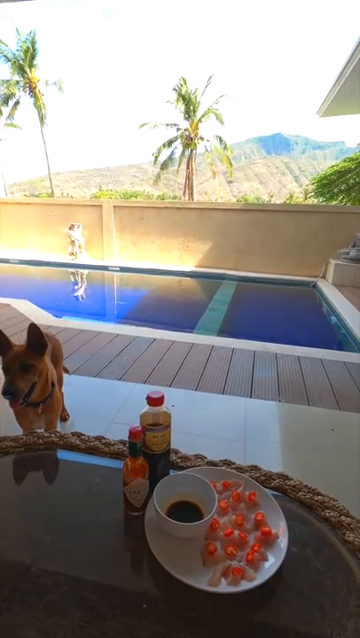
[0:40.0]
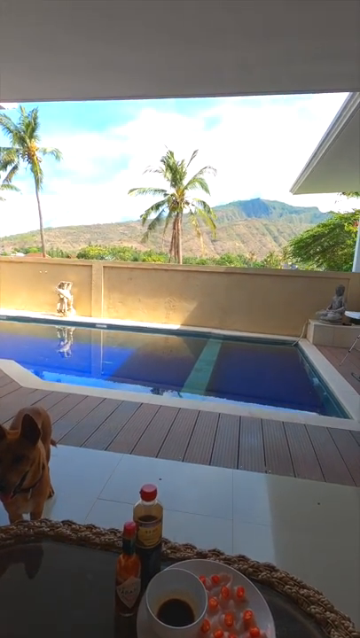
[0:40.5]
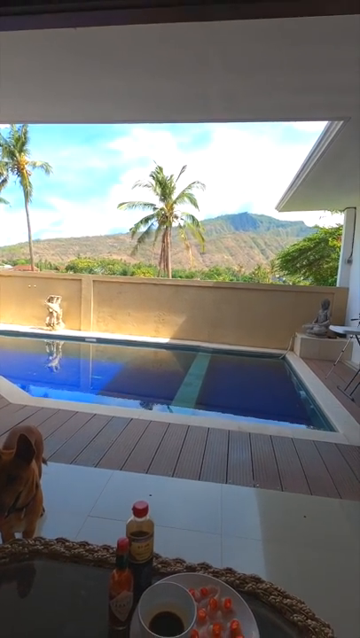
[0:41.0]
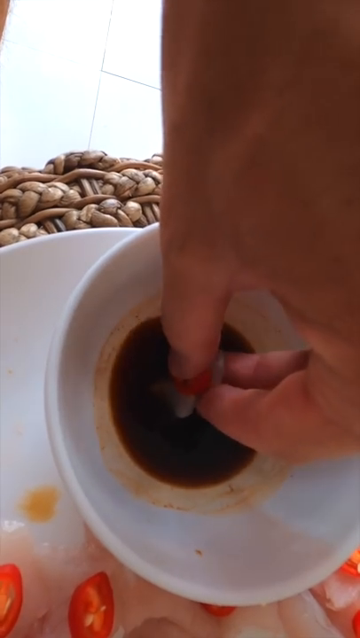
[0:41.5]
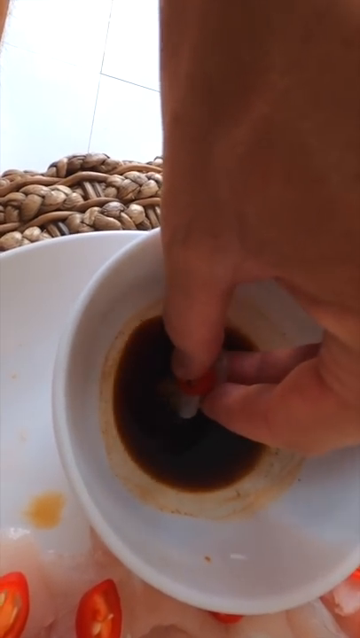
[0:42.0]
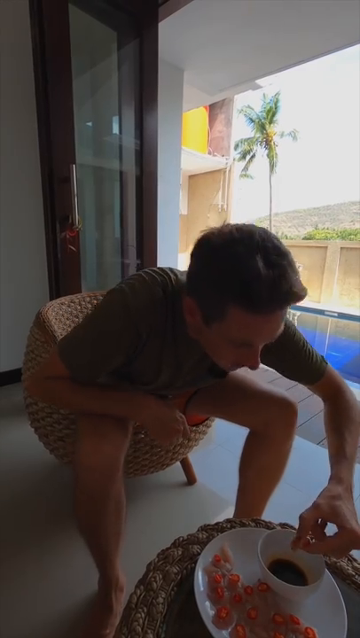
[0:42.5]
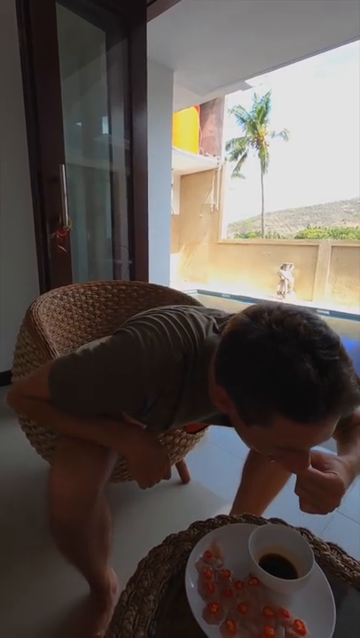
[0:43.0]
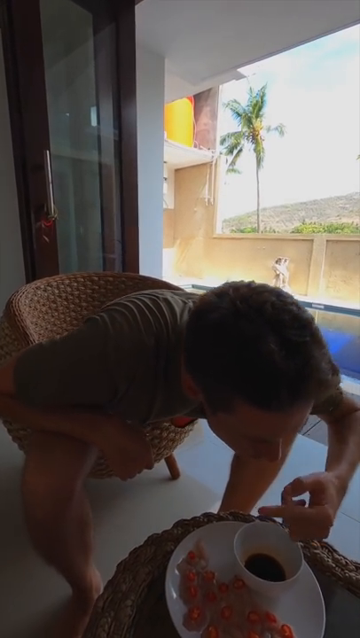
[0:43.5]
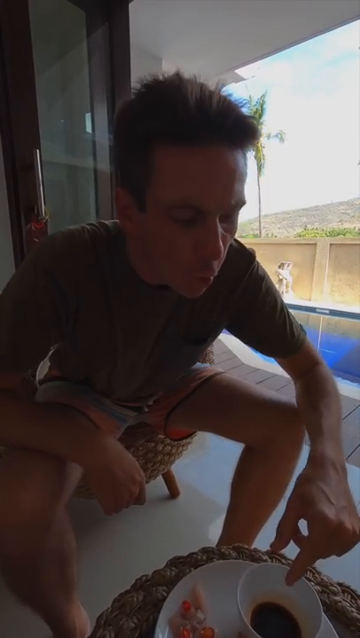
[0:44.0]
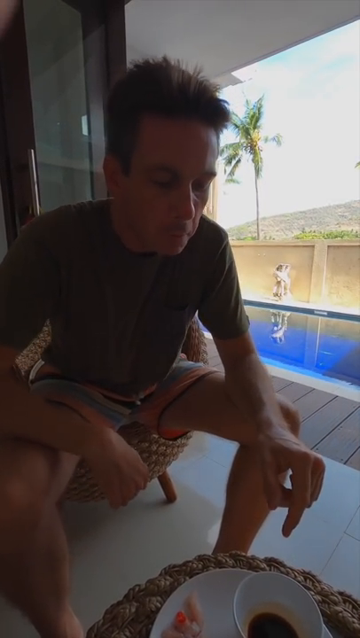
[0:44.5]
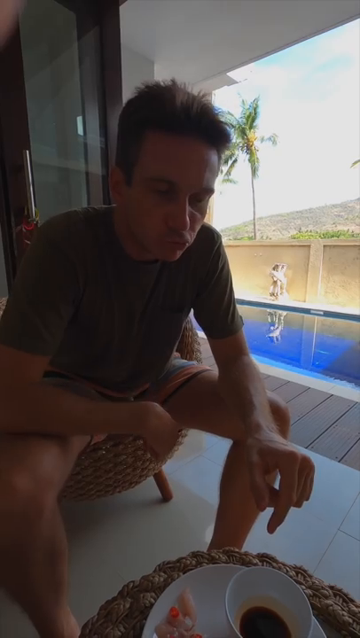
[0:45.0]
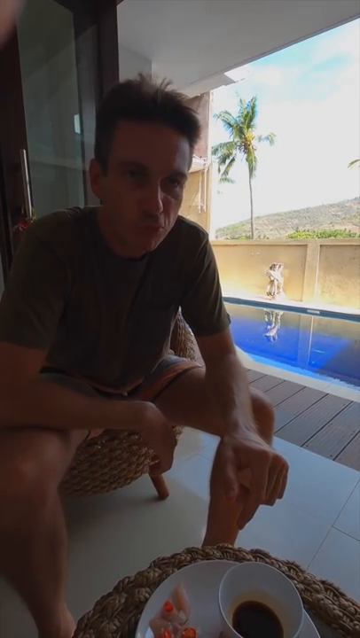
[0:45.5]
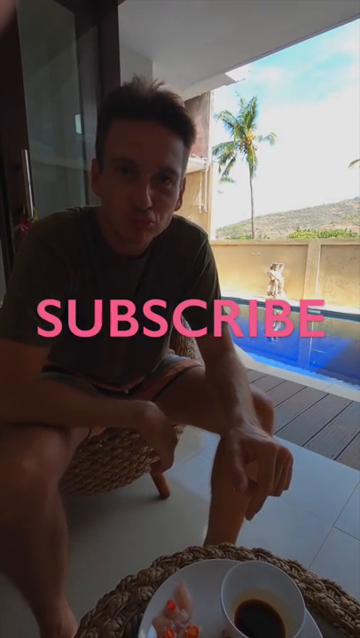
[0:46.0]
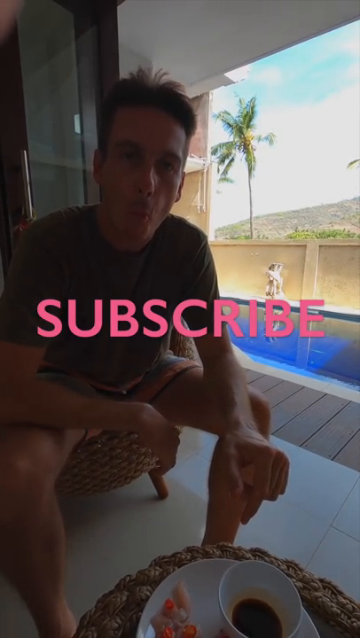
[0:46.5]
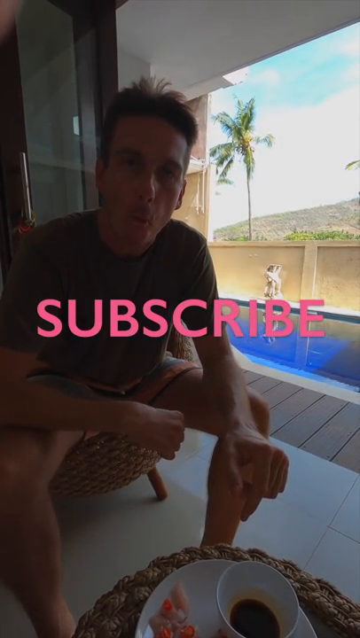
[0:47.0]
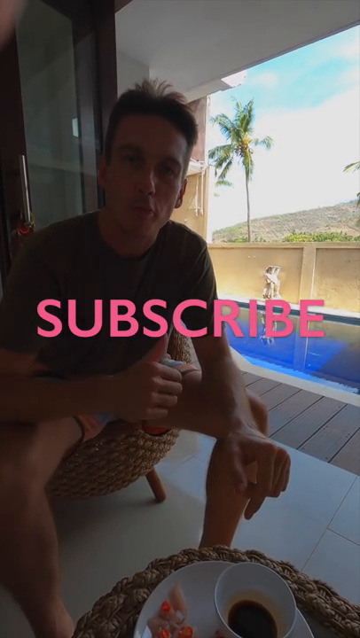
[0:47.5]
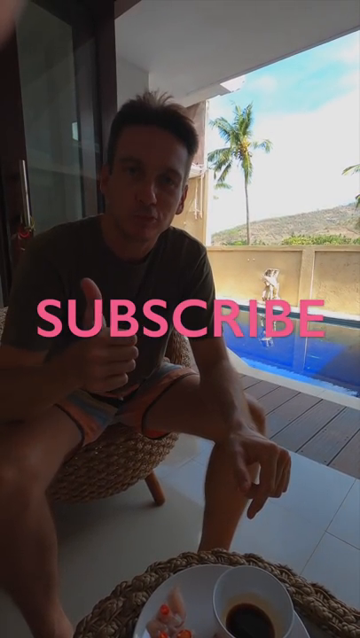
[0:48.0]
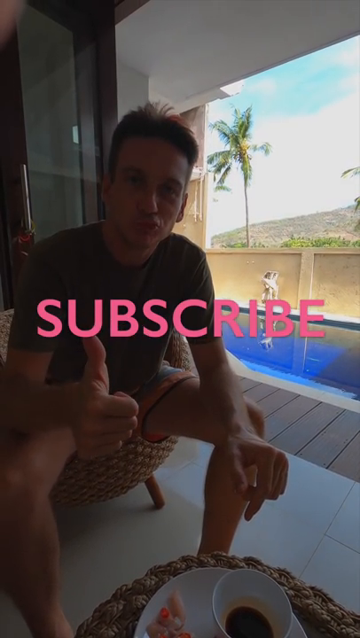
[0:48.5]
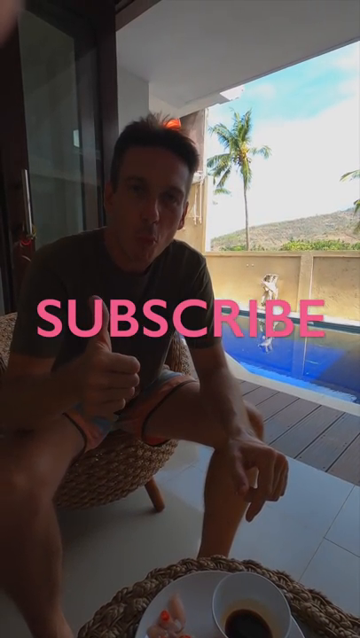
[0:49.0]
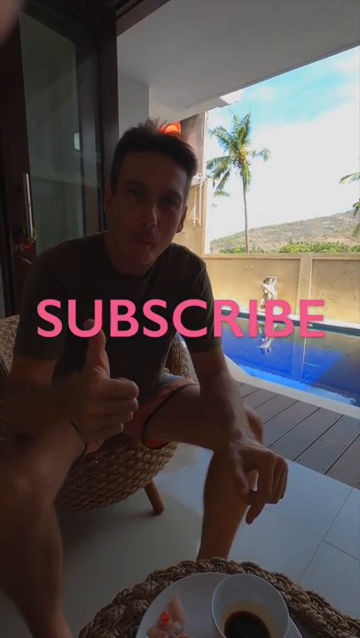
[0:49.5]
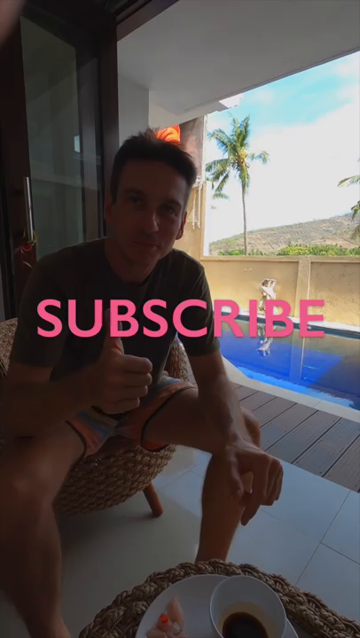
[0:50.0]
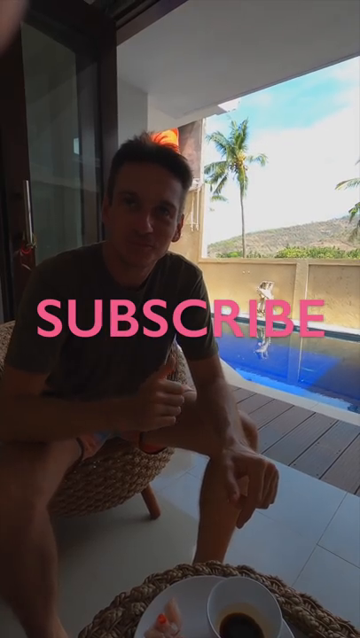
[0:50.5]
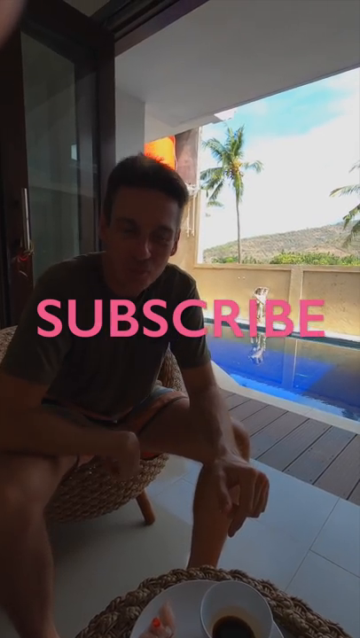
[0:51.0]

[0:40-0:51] Sashimi is dipped into a bowl of soy sauce. A man with short hair, wearing a t-shirt, sits by a pool trying the sashimi and chewing it, with the plate in front of him: a white plate, a white bowl with soy sauce, and a bunch of different cuts of sashimi with something red on top, maybe chili, though it is hard to tell. Around the pool are palm trees and what looks like maybe an apartment with possibly other units nearby, or a large house with different wings. There are windows behind him and a big balcony pool deck to his left. He wears shorts and sits in a chair, with the plate of sashimi on a woven table or ottoman, maybe wicker or another plant fiber. At the end of the video the word "subscribe" appears with a kind of scuba diving fish logo or icon.